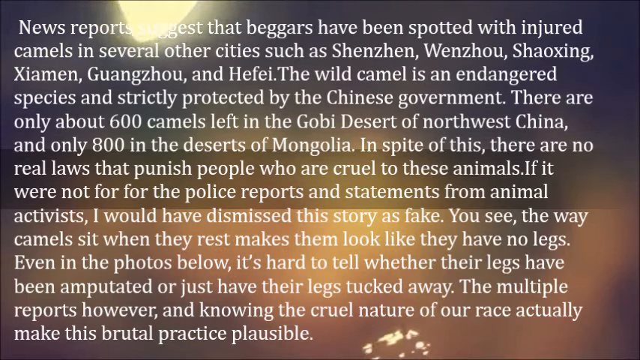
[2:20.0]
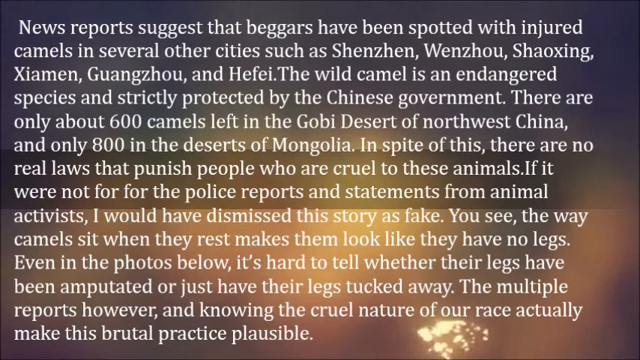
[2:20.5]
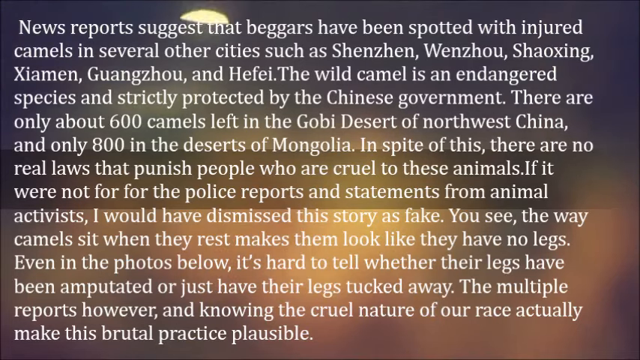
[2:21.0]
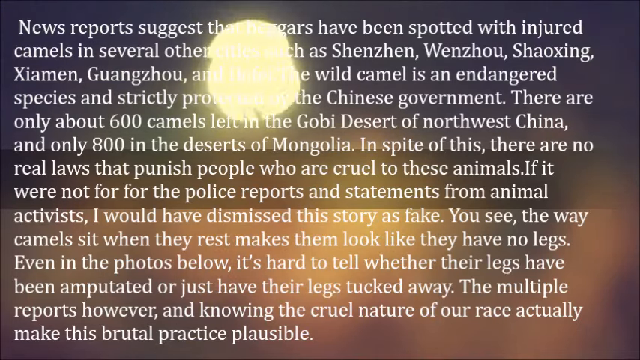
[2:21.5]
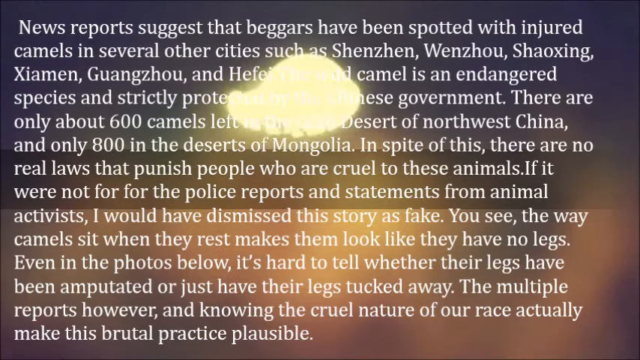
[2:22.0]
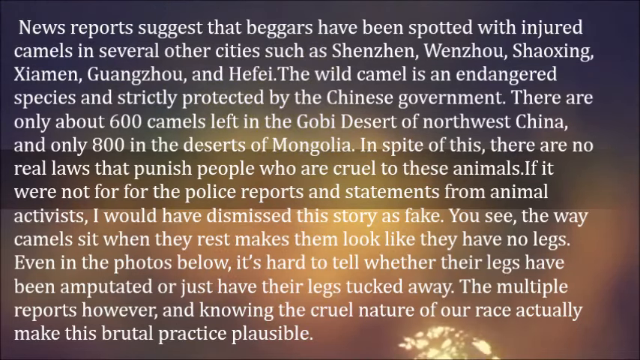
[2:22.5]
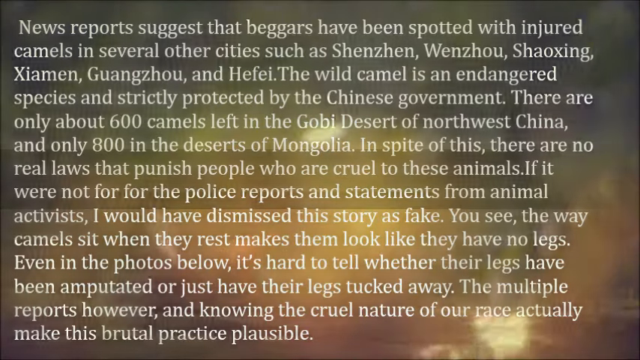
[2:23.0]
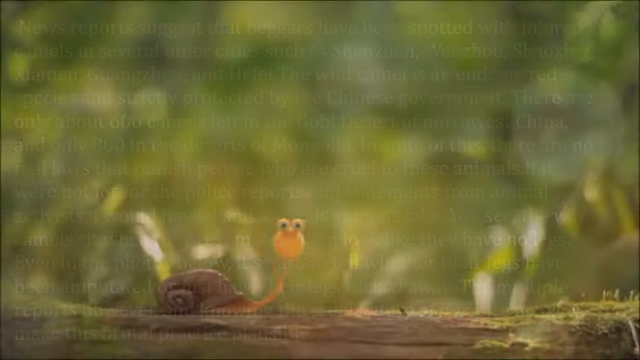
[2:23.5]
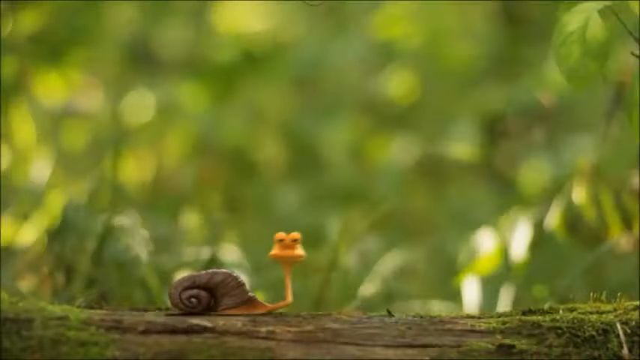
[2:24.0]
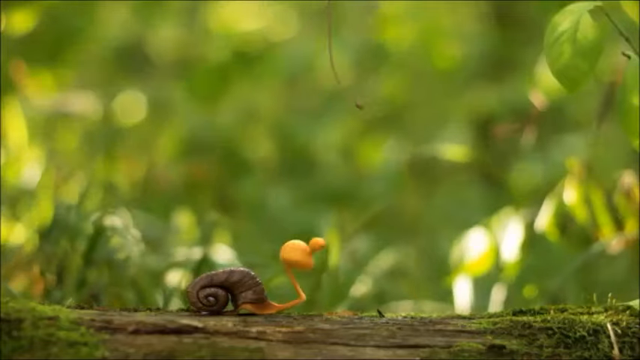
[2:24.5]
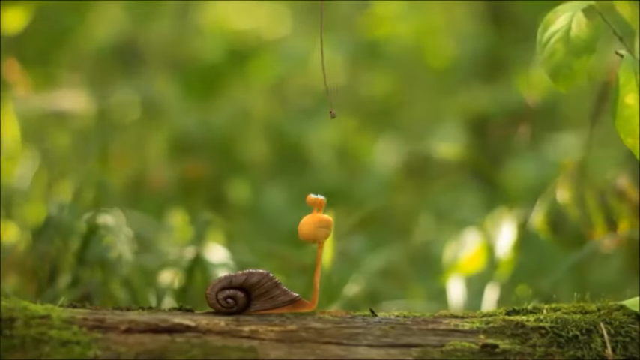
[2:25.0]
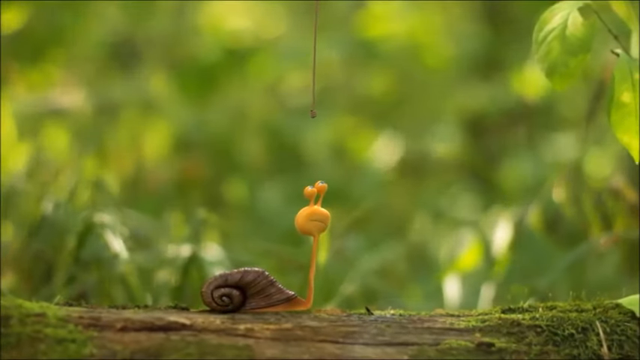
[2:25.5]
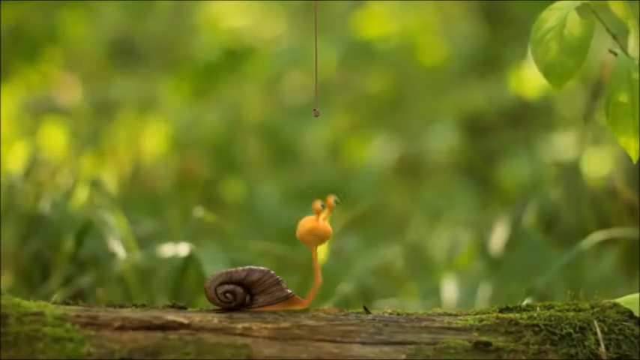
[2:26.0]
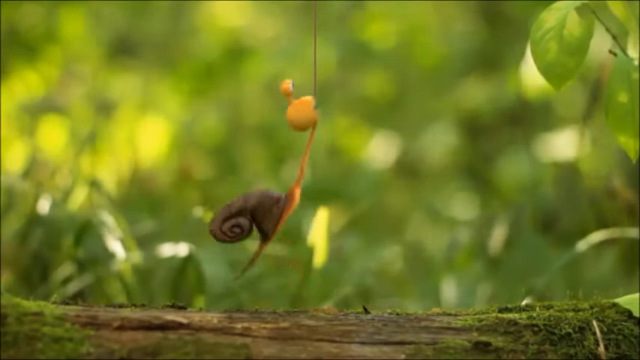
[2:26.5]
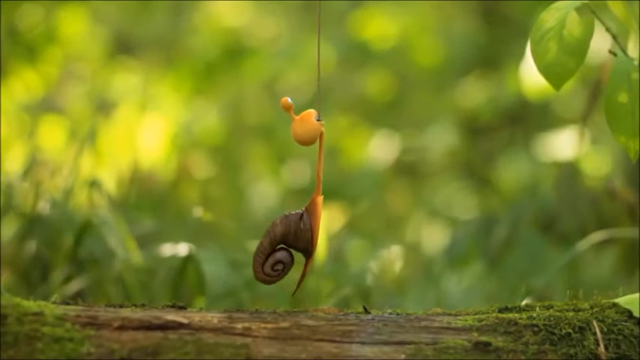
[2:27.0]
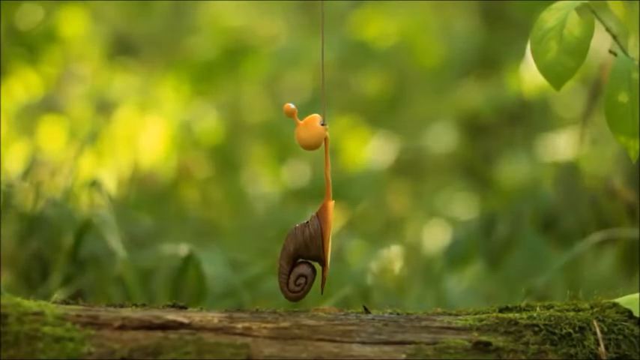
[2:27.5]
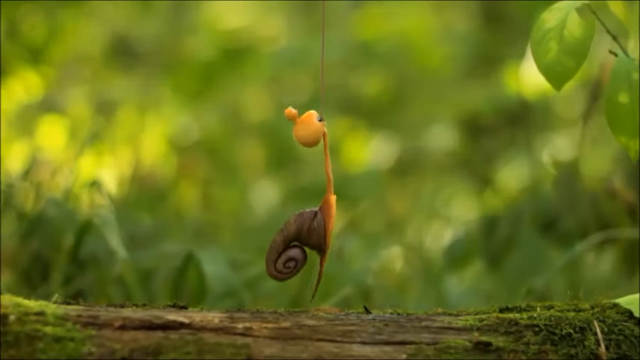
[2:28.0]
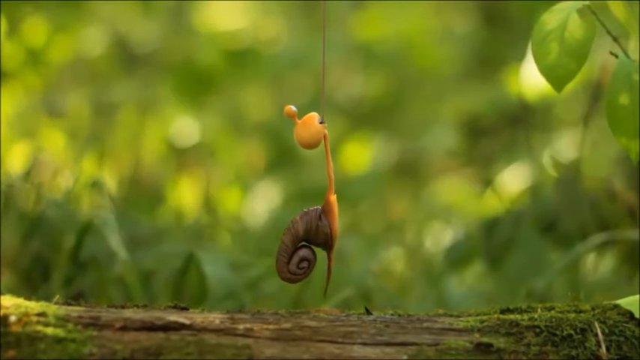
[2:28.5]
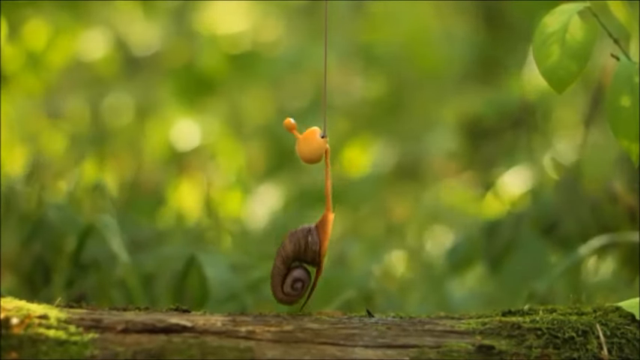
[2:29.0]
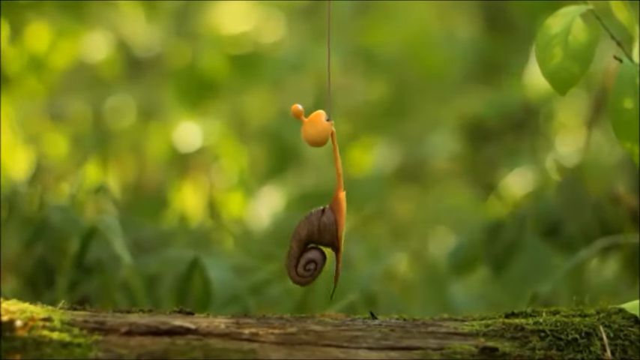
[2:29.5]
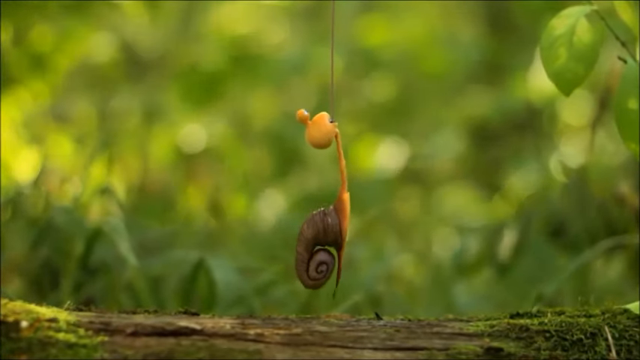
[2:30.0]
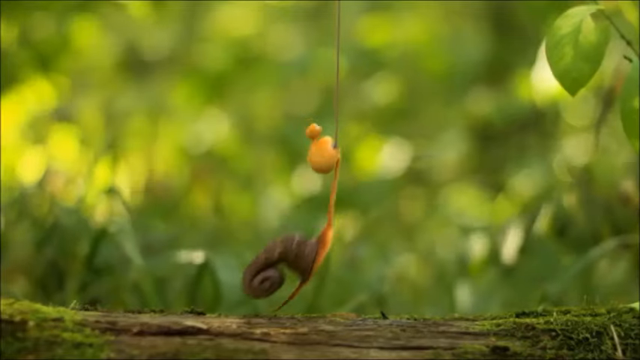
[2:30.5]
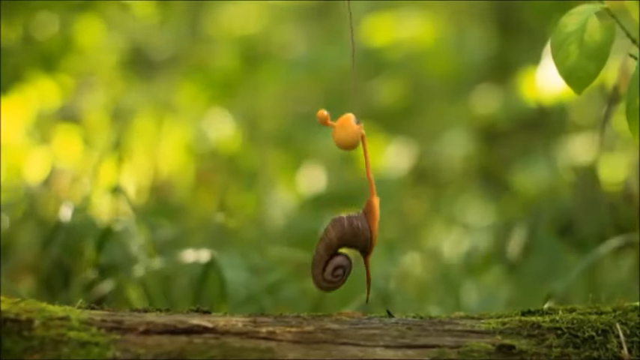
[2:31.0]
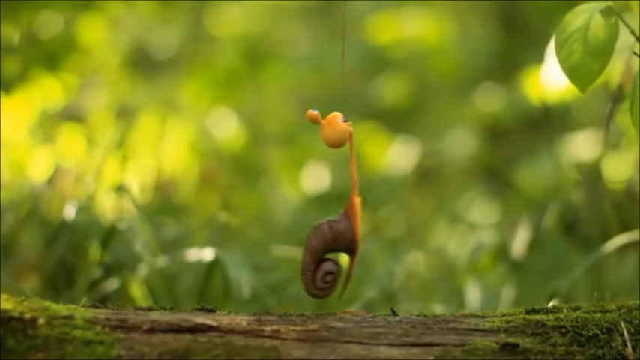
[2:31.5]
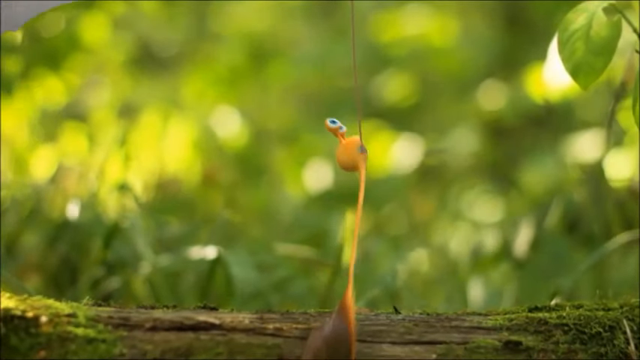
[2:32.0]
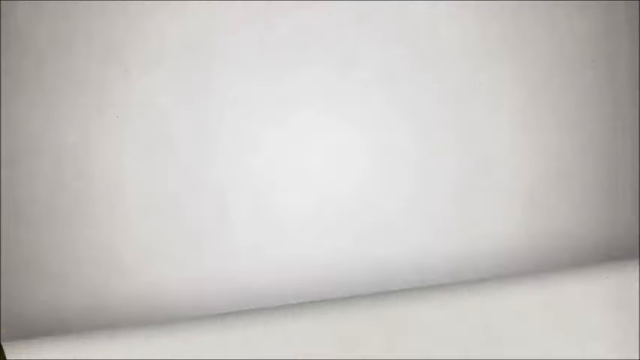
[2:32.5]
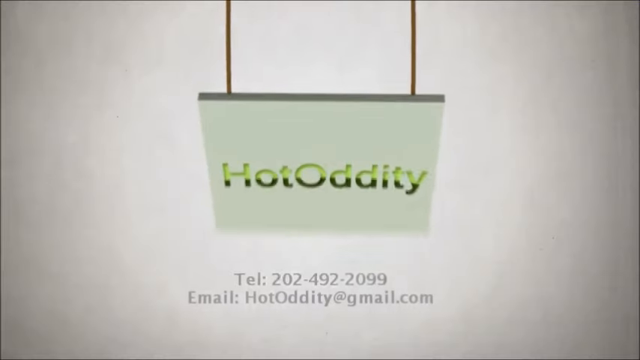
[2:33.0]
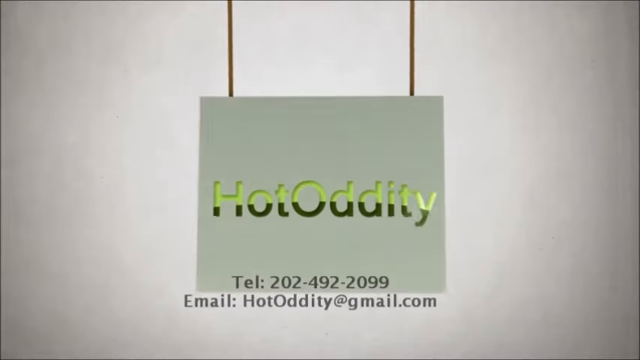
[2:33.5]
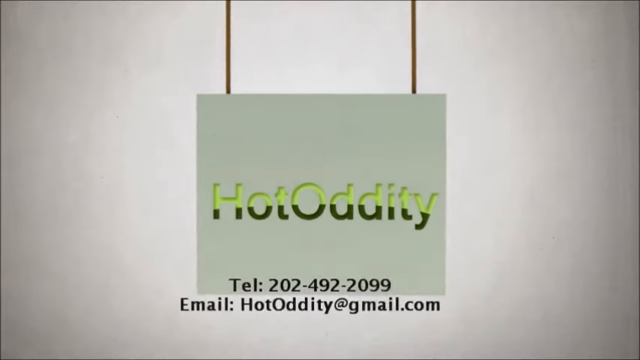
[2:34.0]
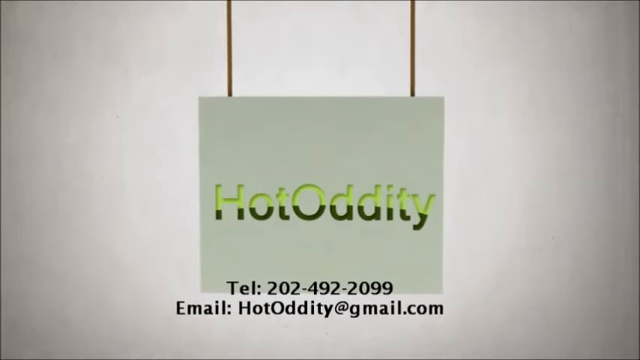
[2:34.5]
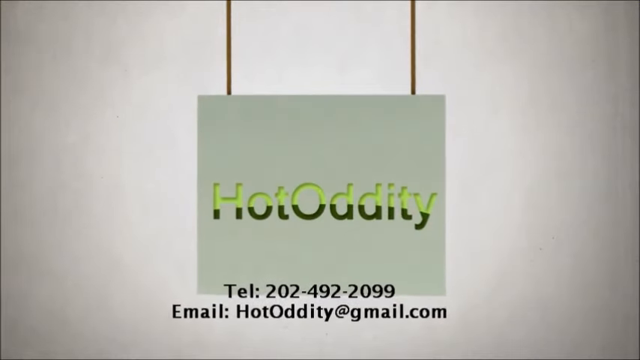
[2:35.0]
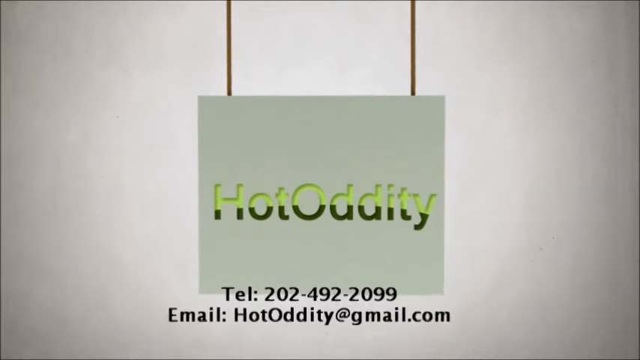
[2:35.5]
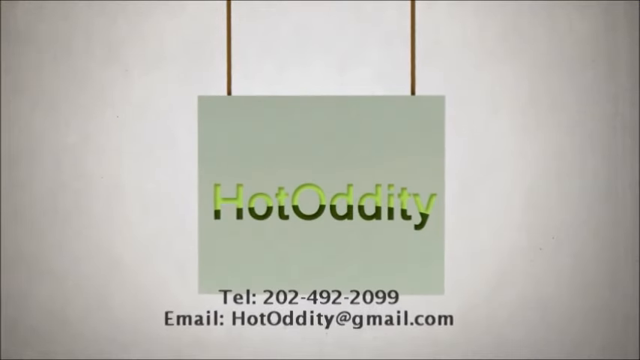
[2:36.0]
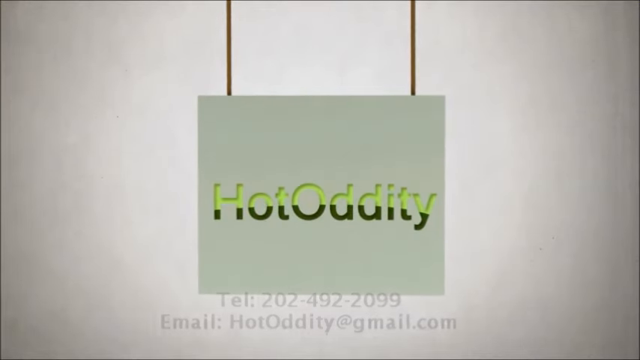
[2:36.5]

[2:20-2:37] The screen is completely consumed by a very lengthy, text-heavy paragraph describing the accusation that Chinese beggars use camels to solicit donations from passersby, apparently cutting off the camels' hooves or deliberately injuring them. The text remains for about half of the segment before the video cuts away to the computer-generated snail slithering across the screen from left to right. Its shell is brown and its body is yellow or yellowish-orange. Toward the end, the snail jumps up to pull down what appears to be some sort of projector screen or film screen saying "Hot Oddity", which shows an email address and a phone number for Hot Oddity, and then the video concludes.